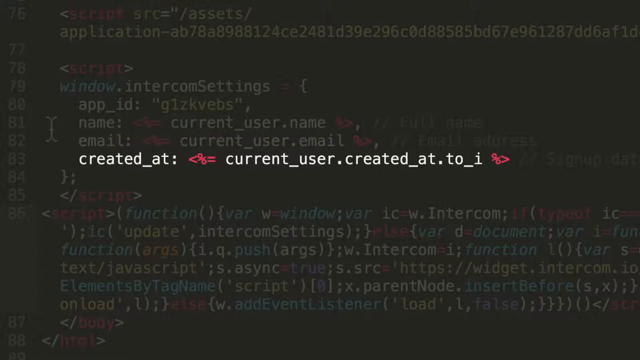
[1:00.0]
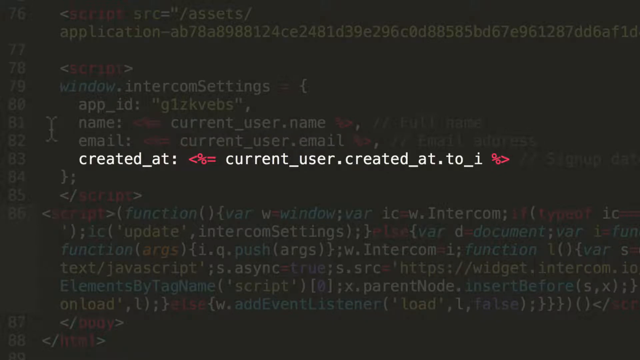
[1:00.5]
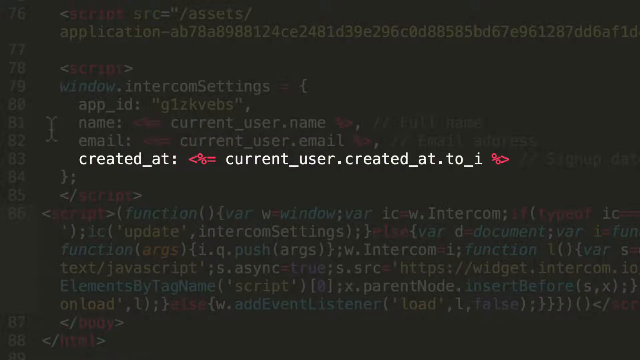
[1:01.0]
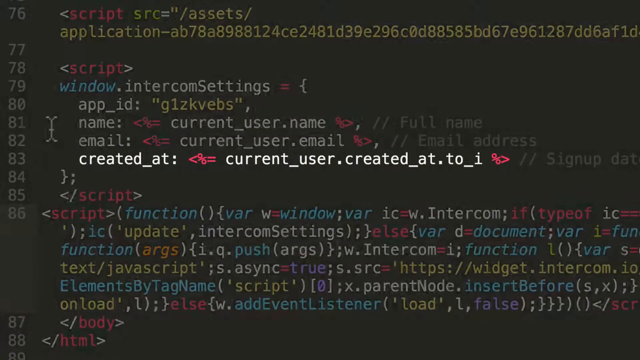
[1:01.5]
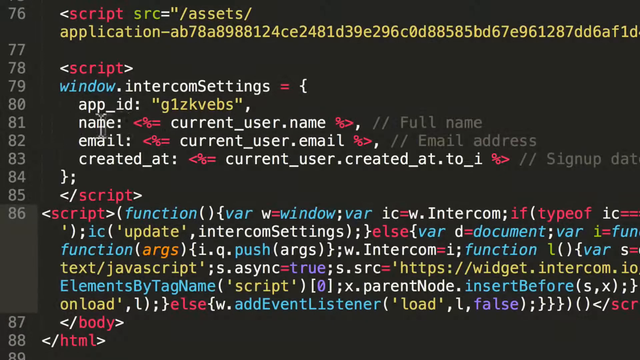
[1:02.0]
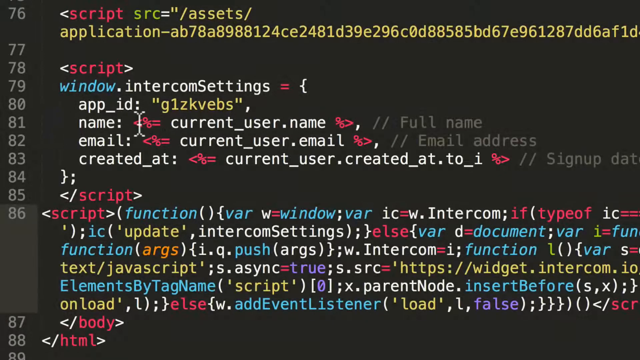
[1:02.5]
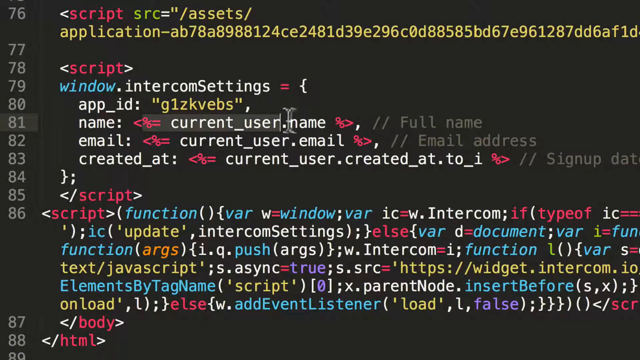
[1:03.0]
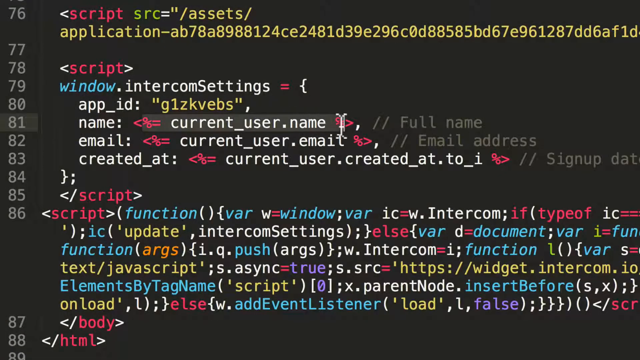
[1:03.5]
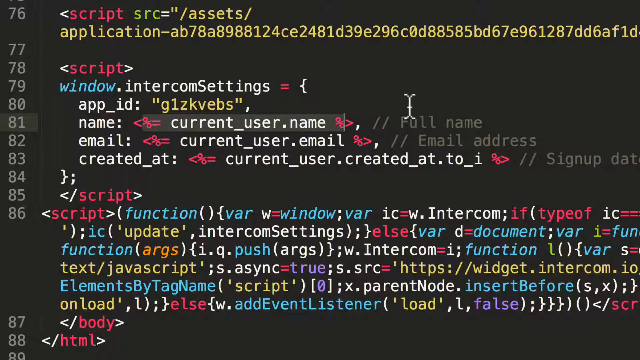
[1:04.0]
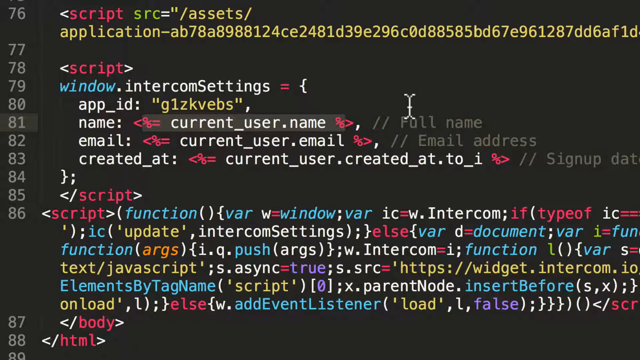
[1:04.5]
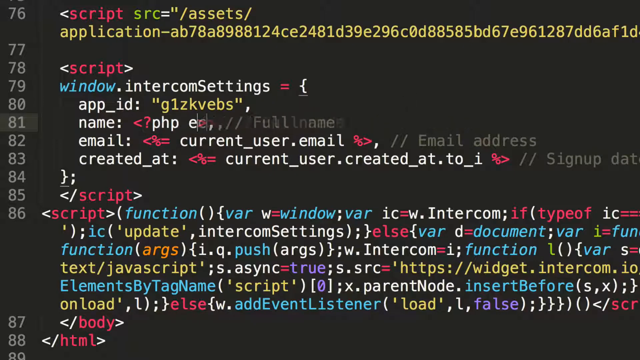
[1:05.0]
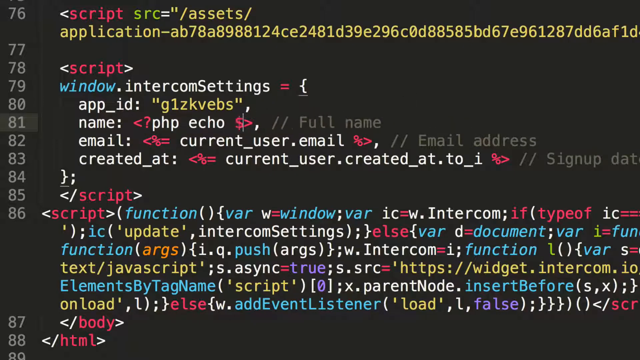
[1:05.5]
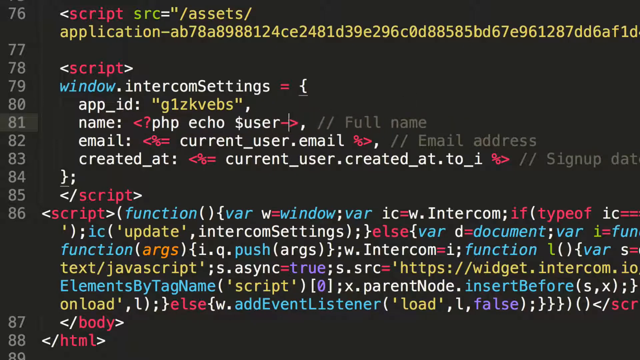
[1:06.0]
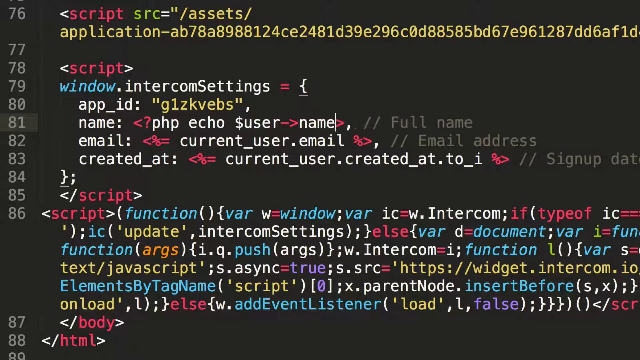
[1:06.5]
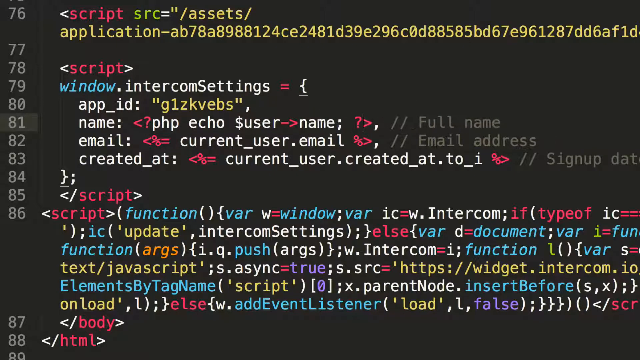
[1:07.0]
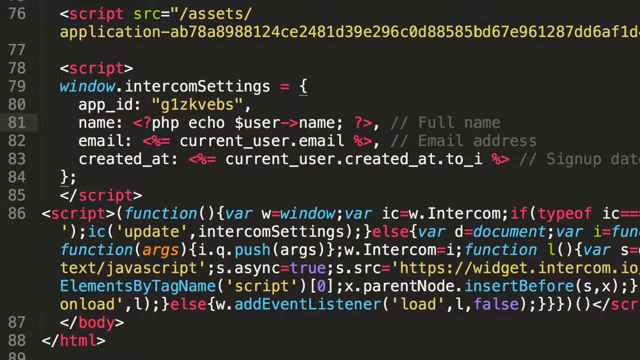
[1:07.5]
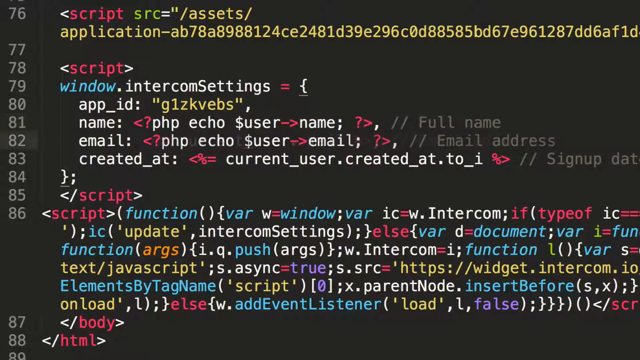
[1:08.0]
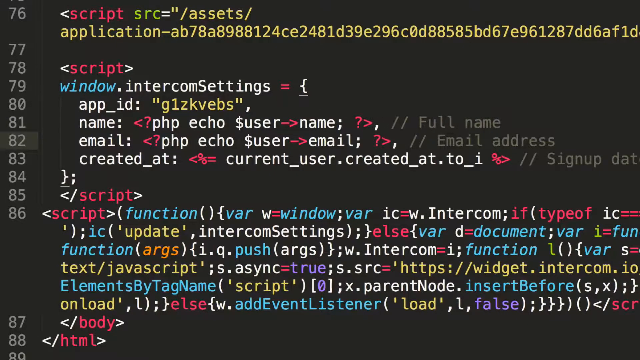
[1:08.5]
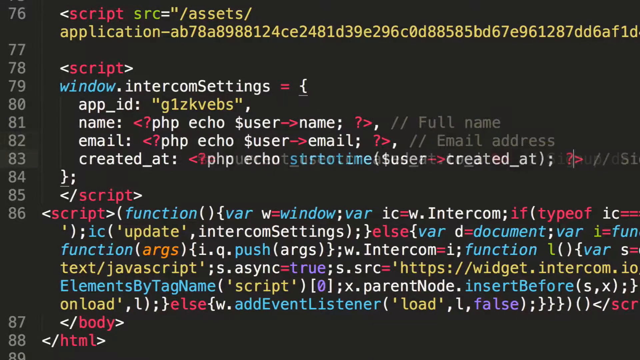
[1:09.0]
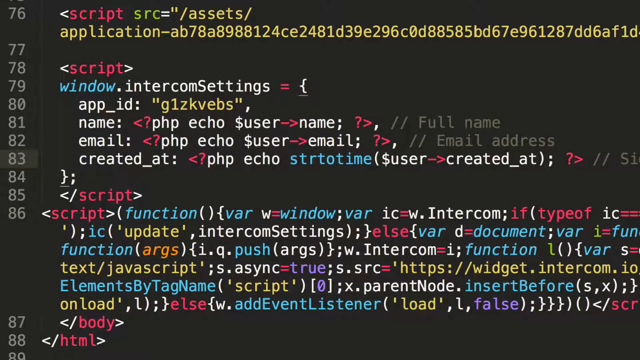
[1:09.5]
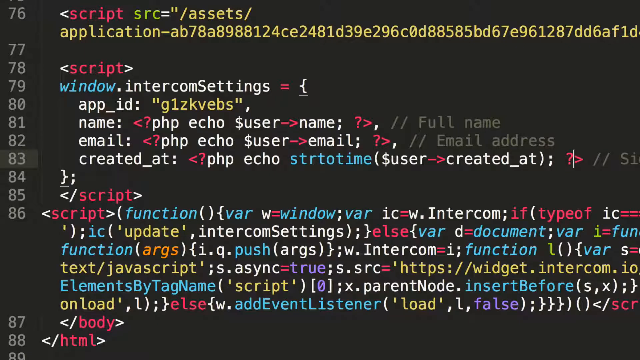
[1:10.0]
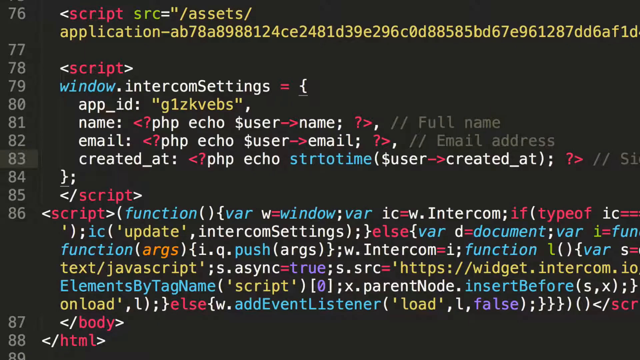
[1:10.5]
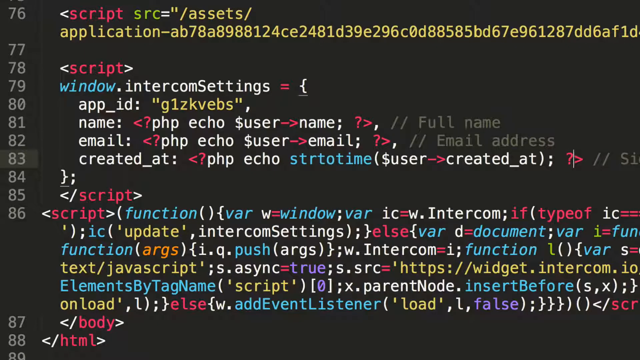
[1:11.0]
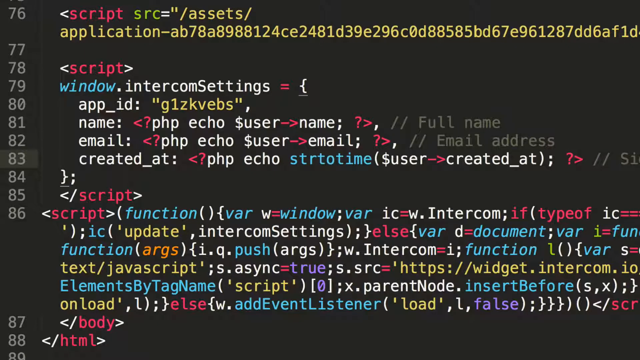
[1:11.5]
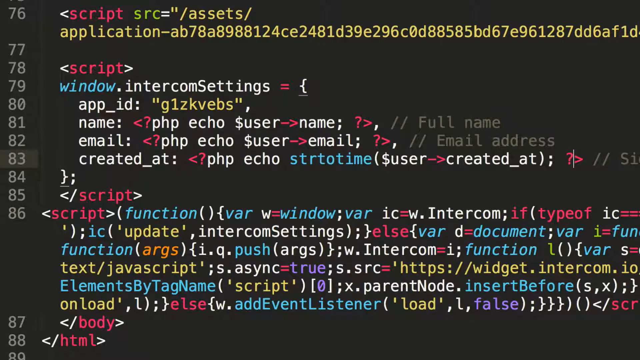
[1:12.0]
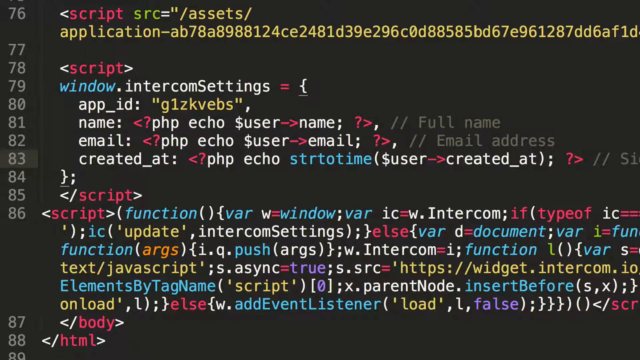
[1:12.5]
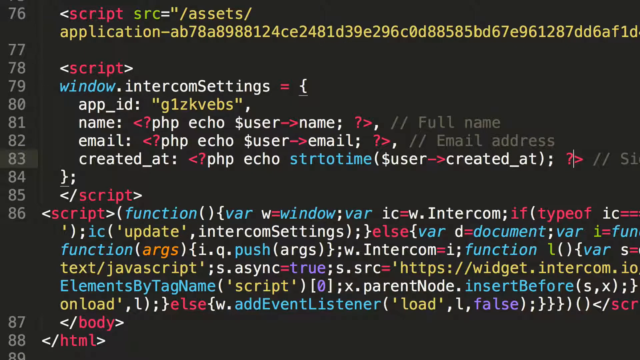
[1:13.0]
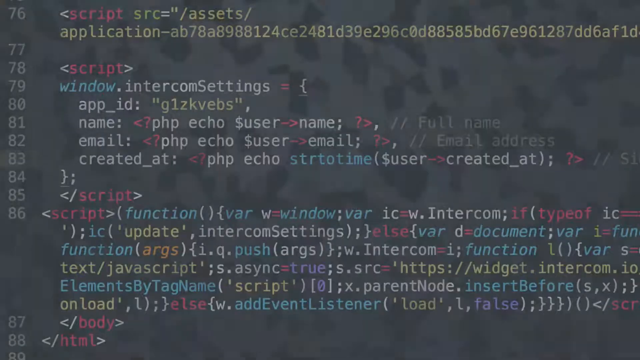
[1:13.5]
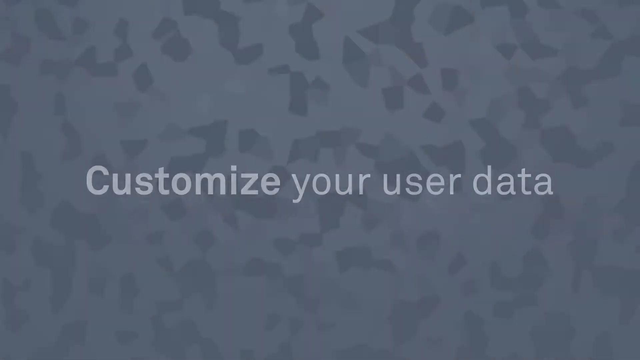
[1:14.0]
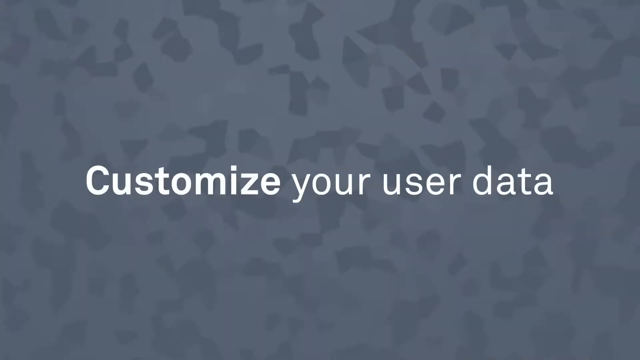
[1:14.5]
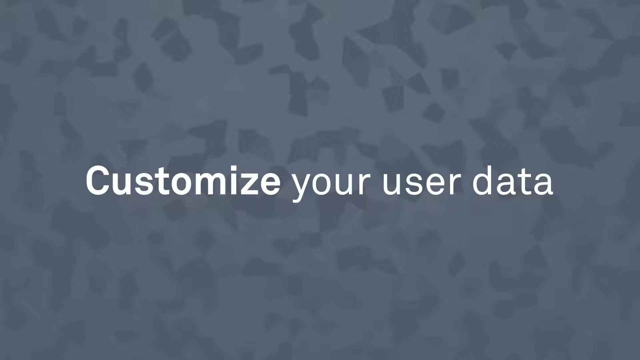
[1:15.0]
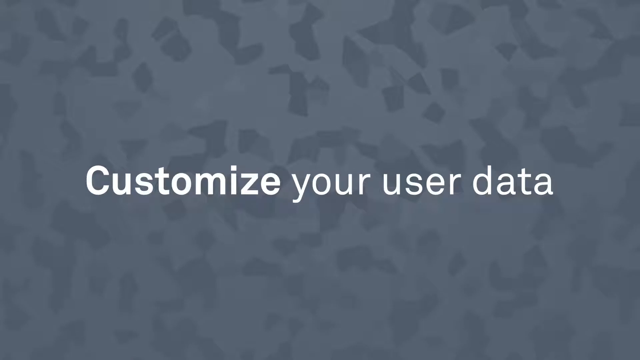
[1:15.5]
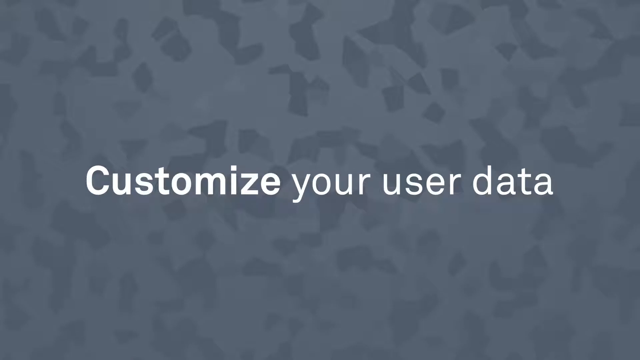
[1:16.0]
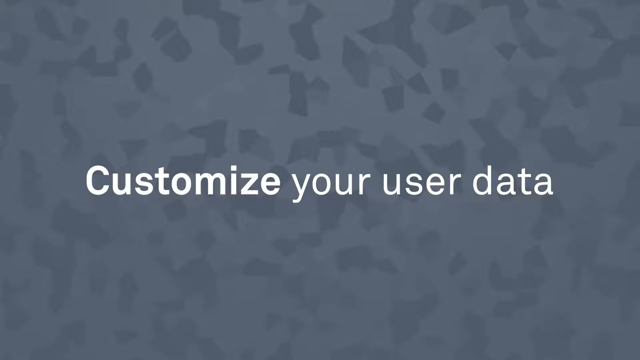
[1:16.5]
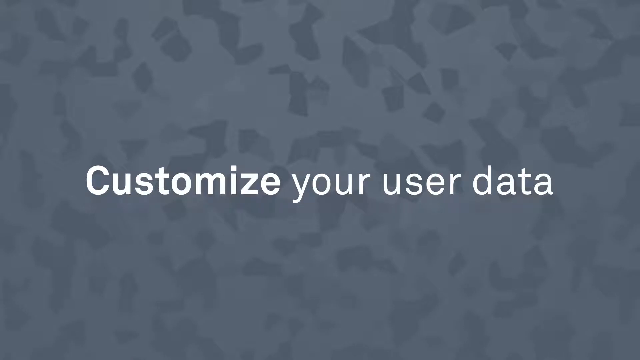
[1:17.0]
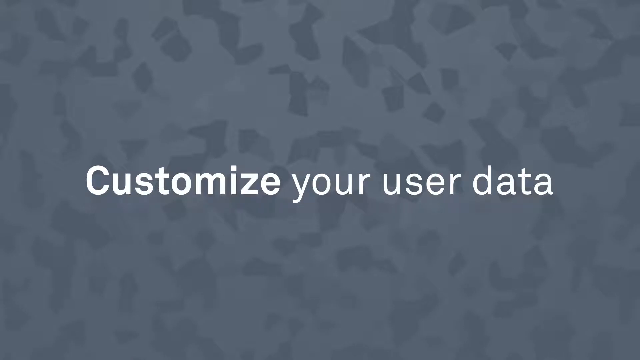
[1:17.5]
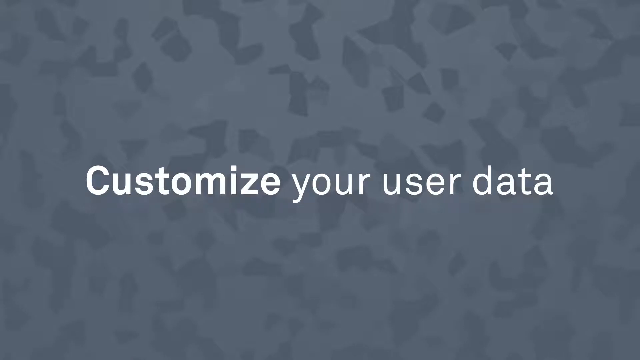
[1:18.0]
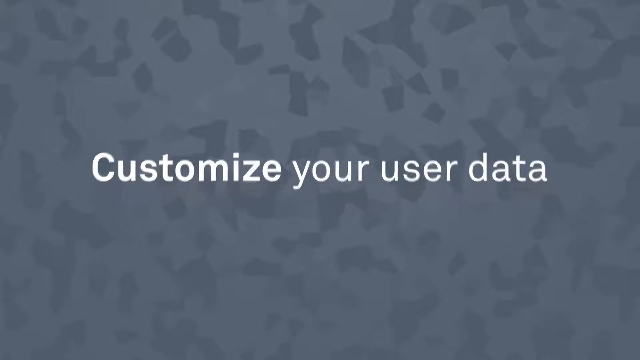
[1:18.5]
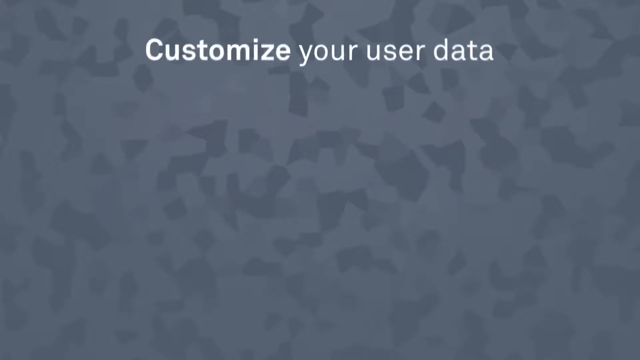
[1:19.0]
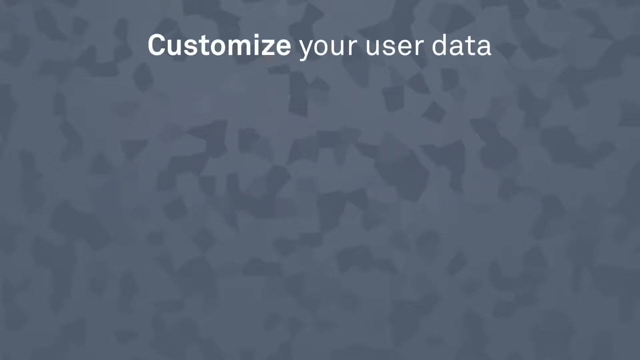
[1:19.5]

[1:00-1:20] On a black background, "created at" is on line 83, and the cursor types more information on line 81, typing "$user" followed by a cross or arrow pointing to the right. The black screen shows "created at," a red symbol, "current_user.created_at.two_i" and another red symbol, with the rest of the information blurred out. Work continues on lines 81 and 83, clicking on each item to complete more of the line sequence, which reads "customize your user data" and "created at current_user.created_at.two_i." Line 83 becomes very bright. The cursor then goes to line 81, which shows user, an arrow, "name," a question mark and "customize your user data."